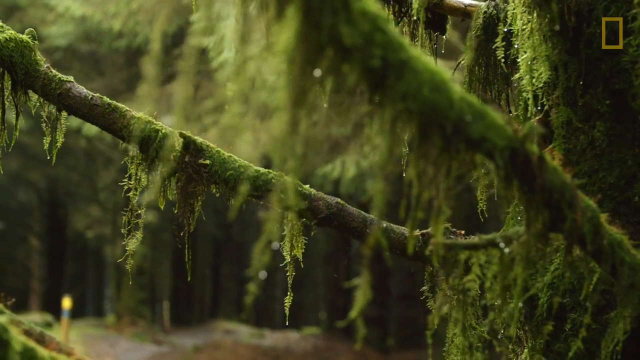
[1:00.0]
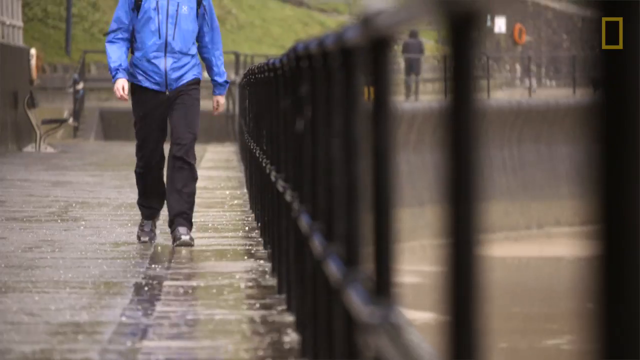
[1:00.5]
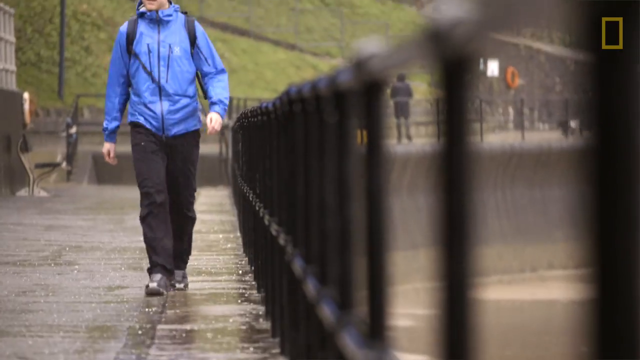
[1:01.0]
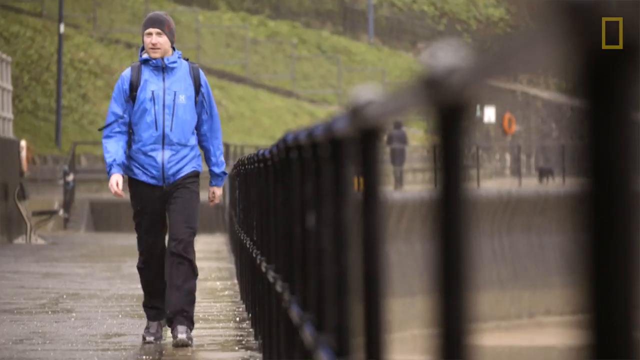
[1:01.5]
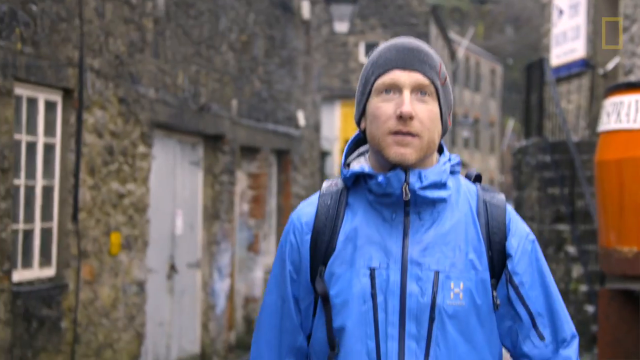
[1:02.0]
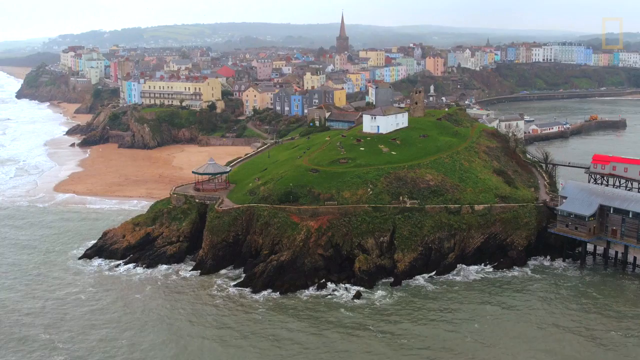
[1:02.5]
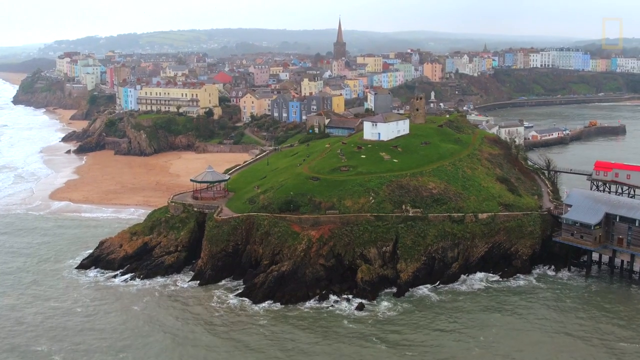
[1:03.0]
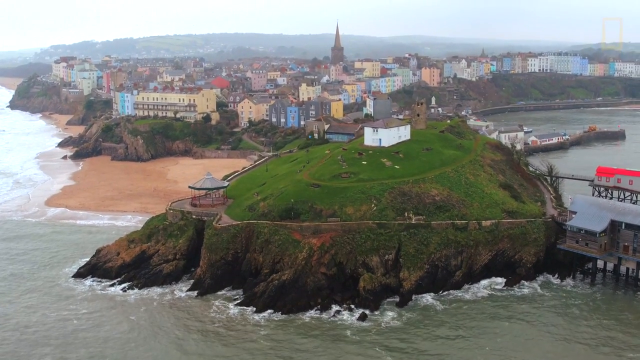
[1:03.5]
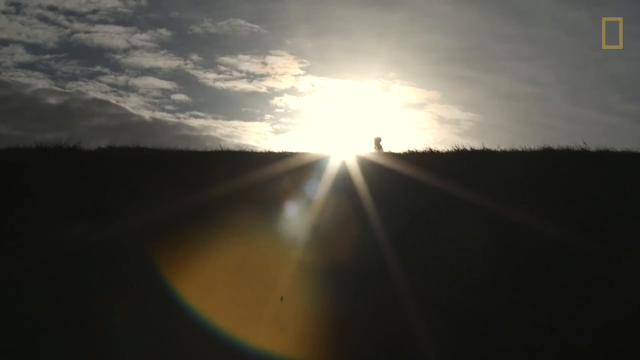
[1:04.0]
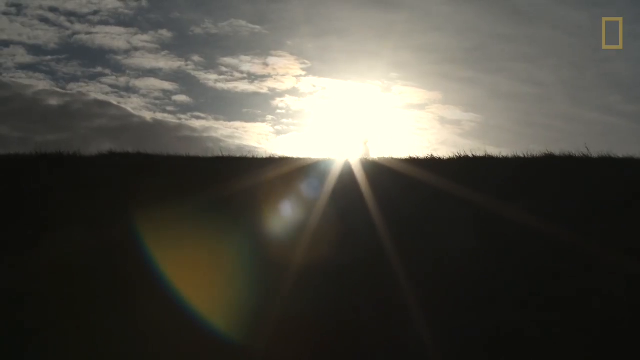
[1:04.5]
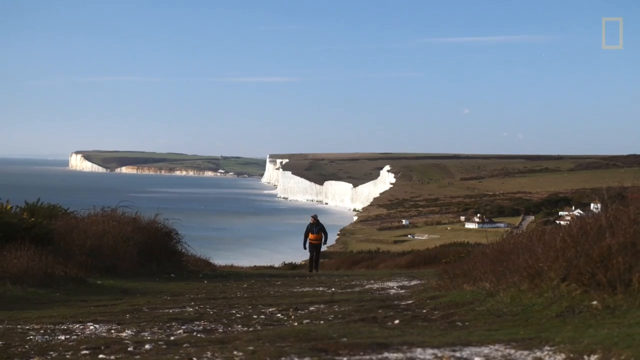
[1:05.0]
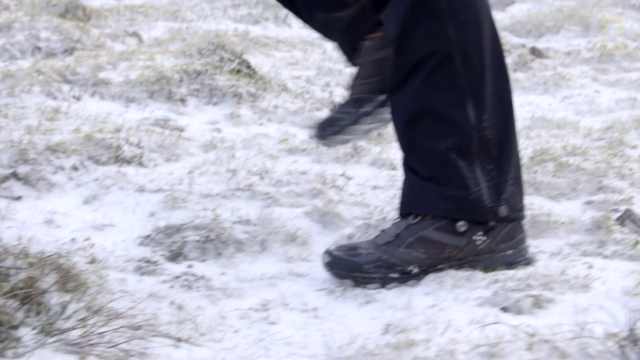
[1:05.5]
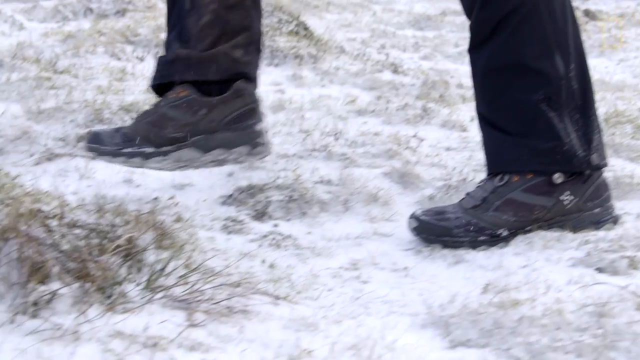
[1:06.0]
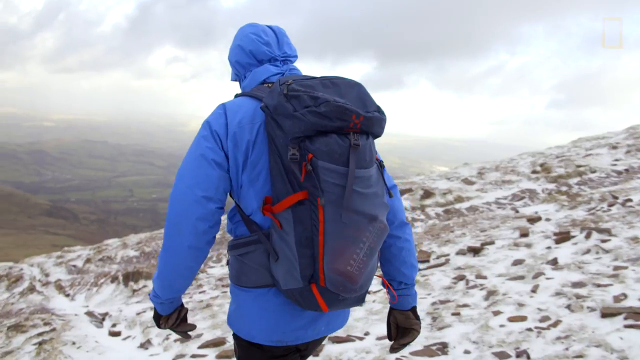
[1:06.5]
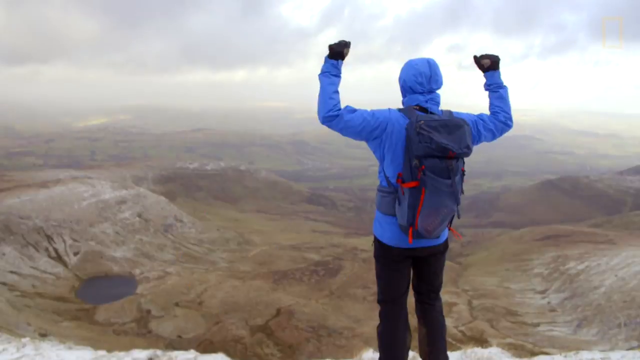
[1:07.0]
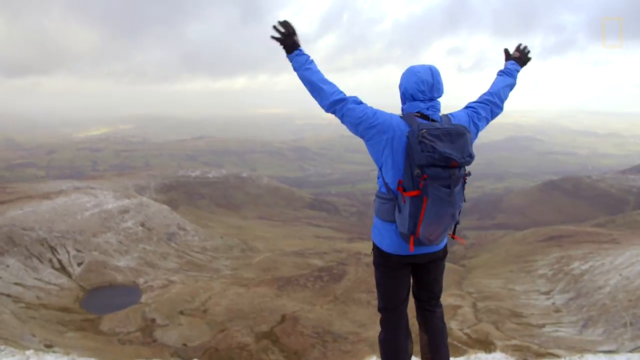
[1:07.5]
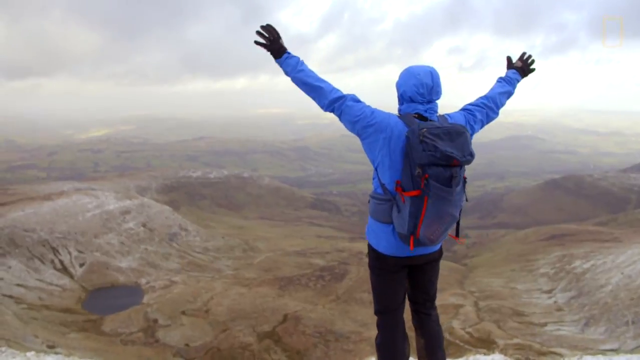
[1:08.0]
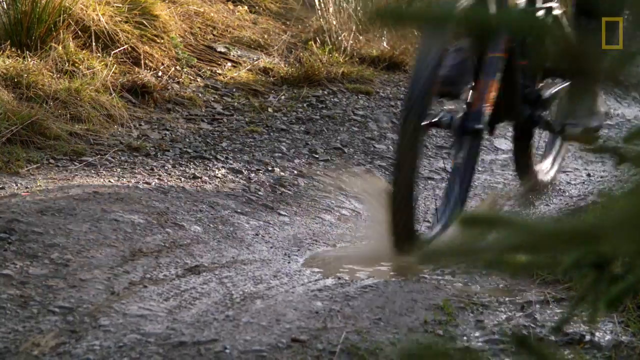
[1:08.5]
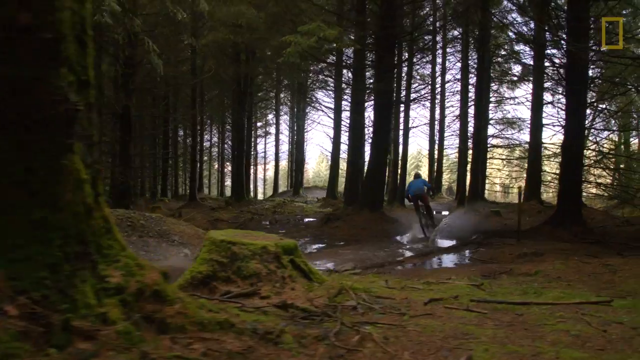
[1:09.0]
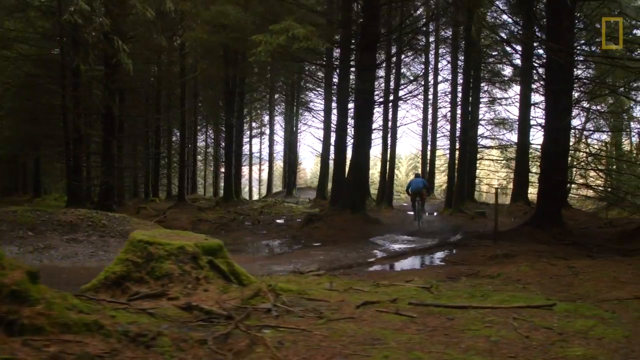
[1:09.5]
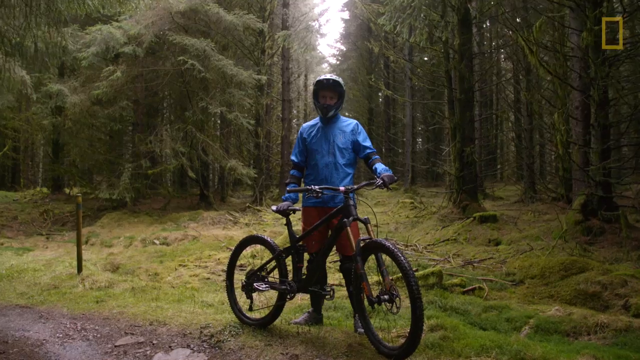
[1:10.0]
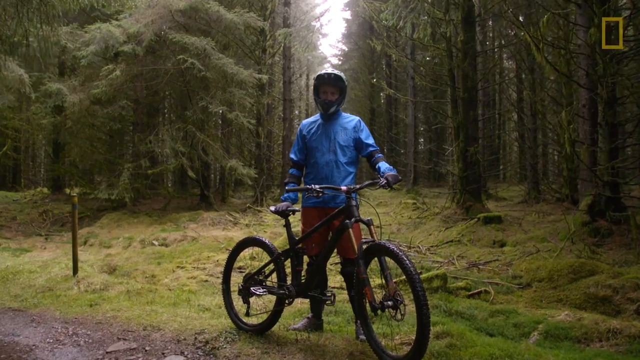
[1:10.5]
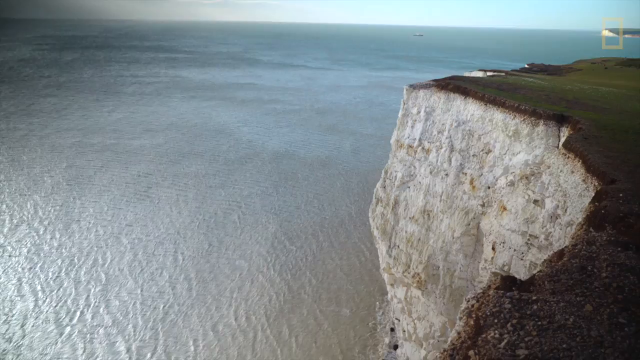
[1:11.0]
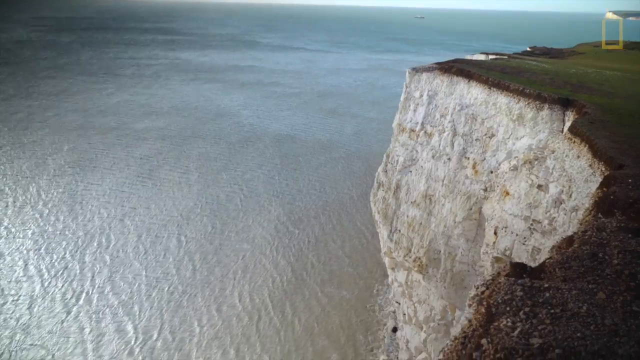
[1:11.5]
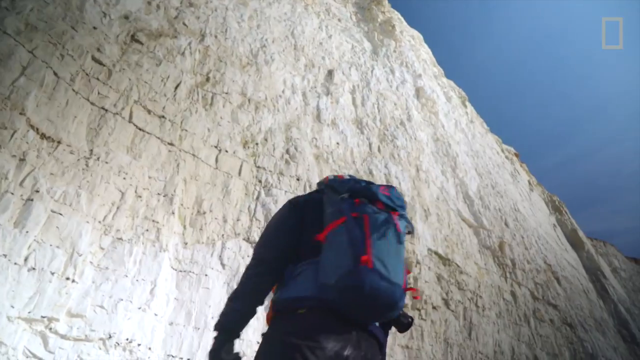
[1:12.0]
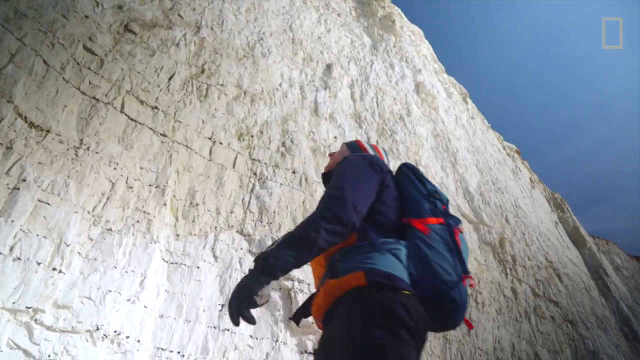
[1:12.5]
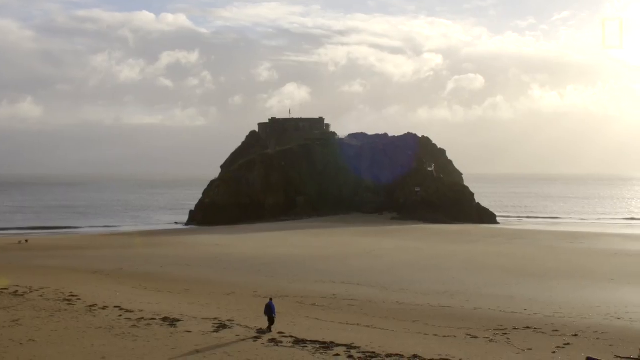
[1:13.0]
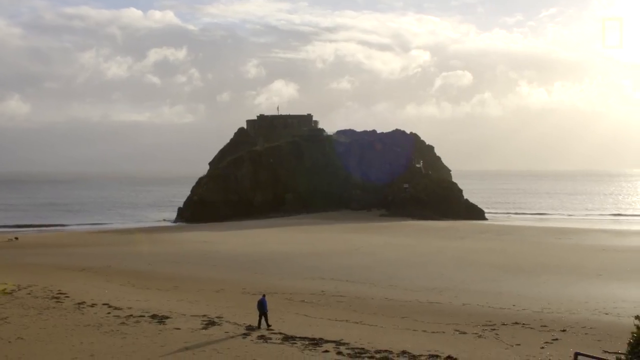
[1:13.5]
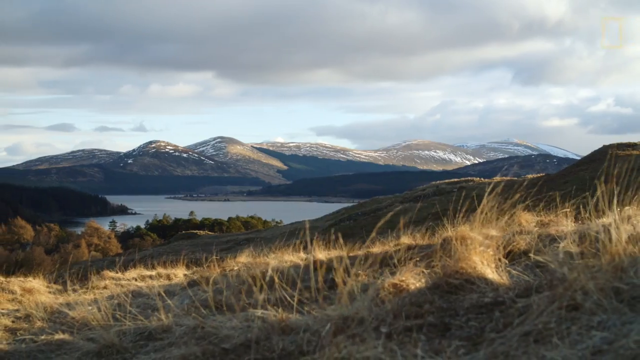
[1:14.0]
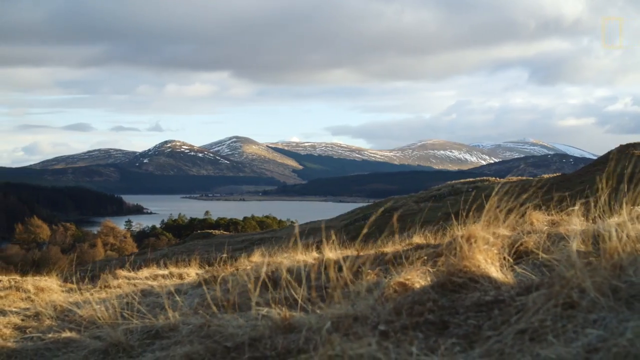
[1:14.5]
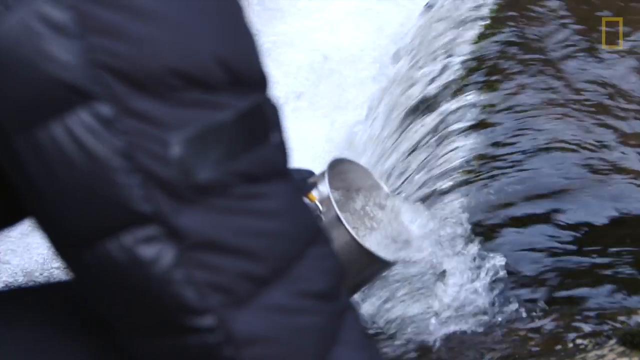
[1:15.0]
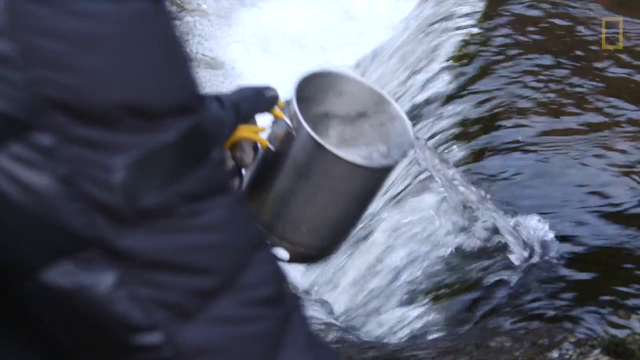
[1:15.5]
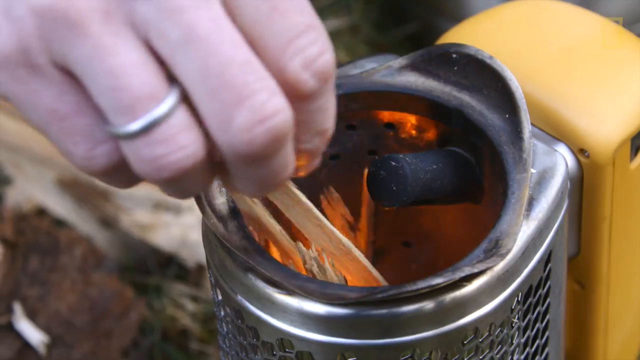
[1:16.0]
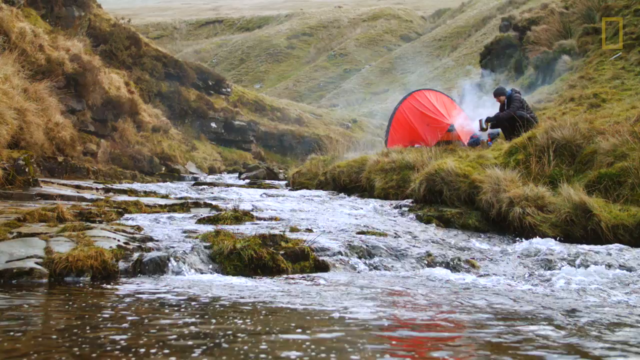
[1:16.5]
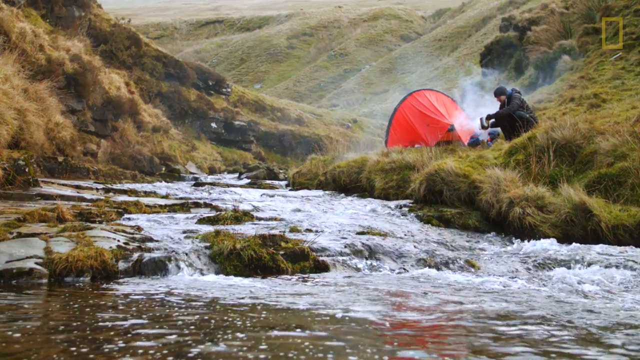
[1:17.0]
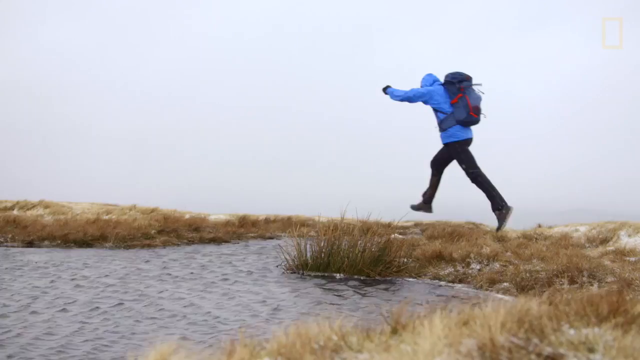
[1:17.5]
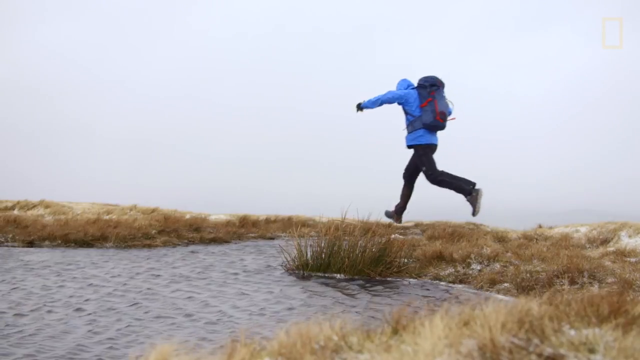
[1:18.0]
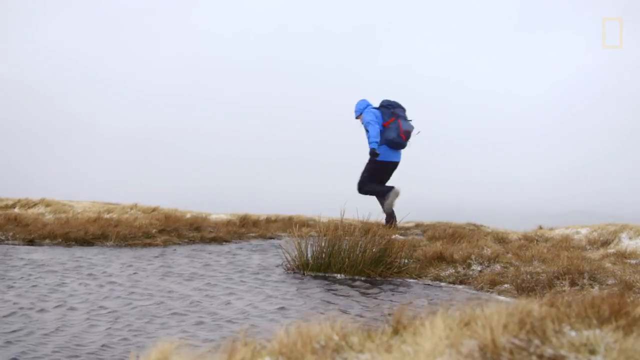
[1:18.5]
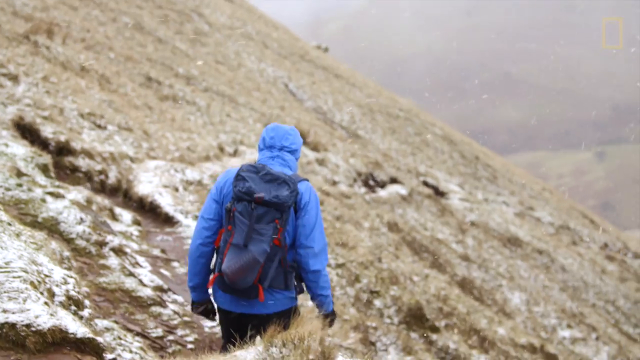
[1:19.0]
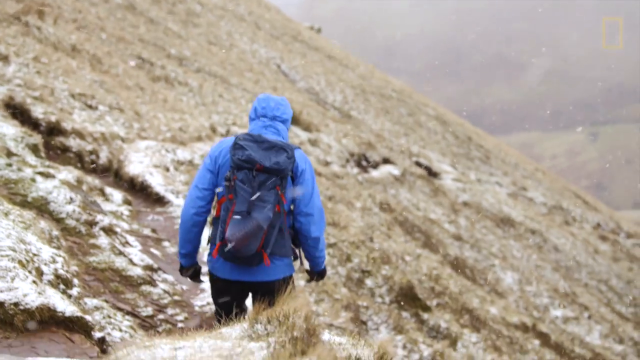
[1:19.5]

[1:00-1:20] A forest appears with moss hanging off all of the trees and branches. The man then walks down the streets of a coastal village built on land with the coast all around it. Cliffs in Britain, apparently on an island, come right up to the edge of the ocean. He is shown mountain biking, walking along huge beaches, visiting rivers and mountain streams, and hiking through a mountainous area in the wintertime. Each scene is a separate cut of his travels, apparently through Great Britain and probably Ireland as well. He travels through forests, mountain bikes and hikes, and is seen by a river with a fire going next to his tent. The scenes span different terrains and weather conditions.